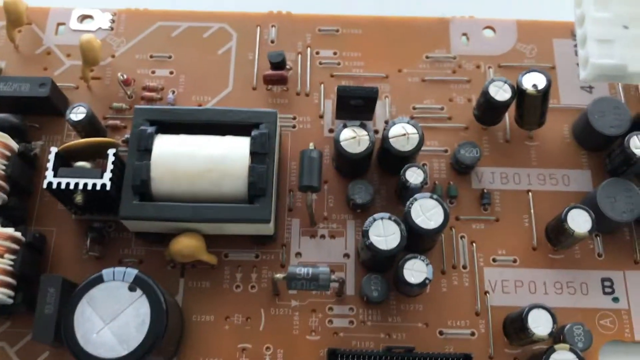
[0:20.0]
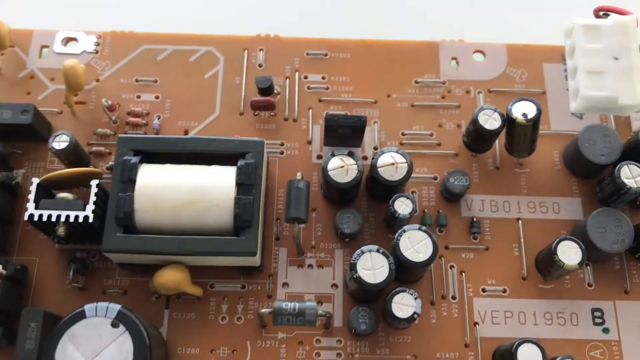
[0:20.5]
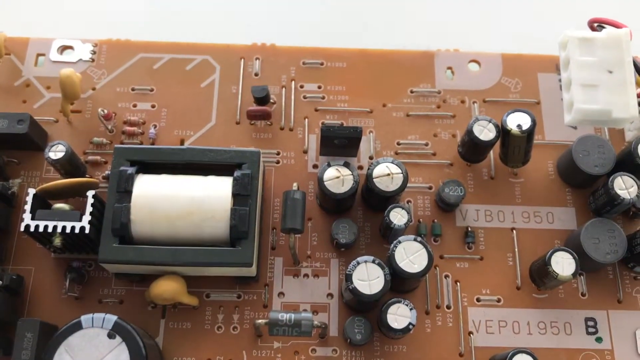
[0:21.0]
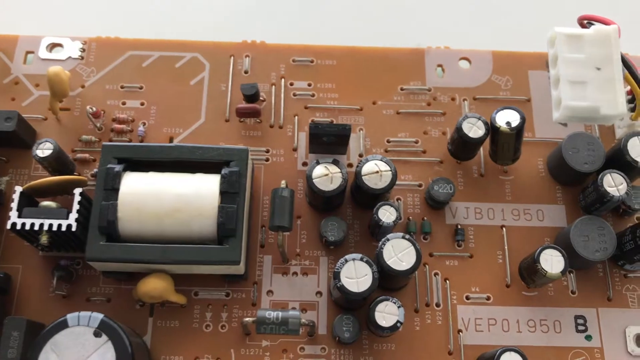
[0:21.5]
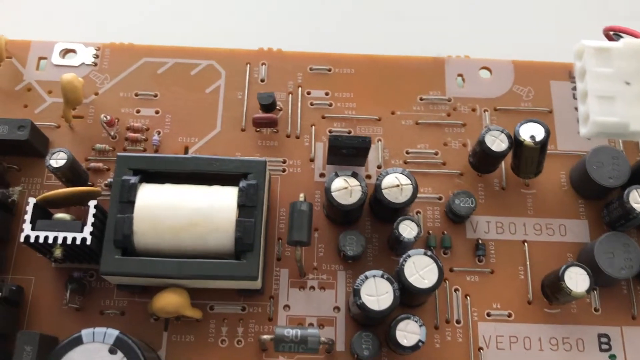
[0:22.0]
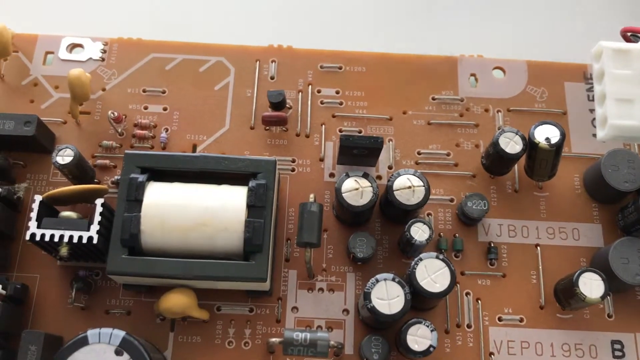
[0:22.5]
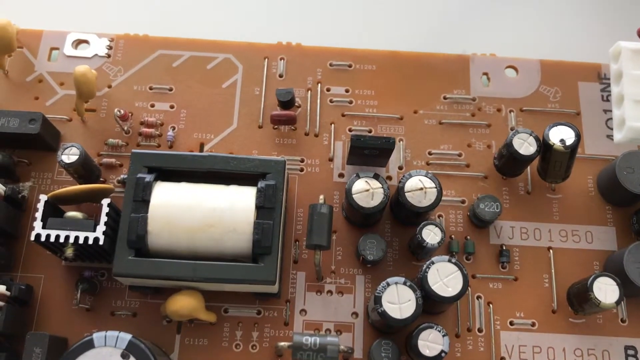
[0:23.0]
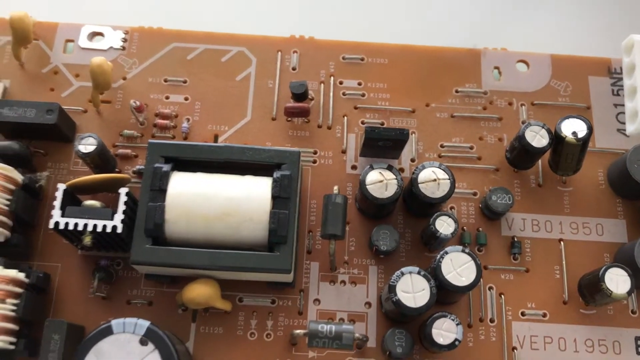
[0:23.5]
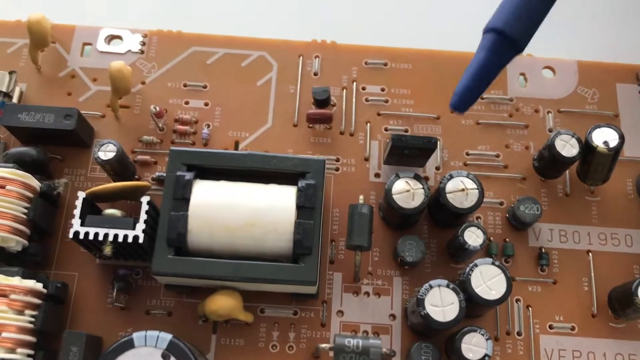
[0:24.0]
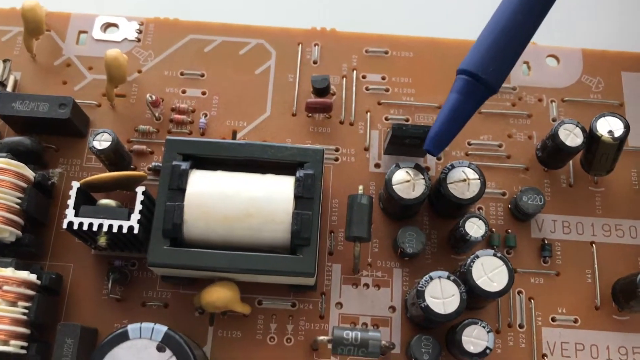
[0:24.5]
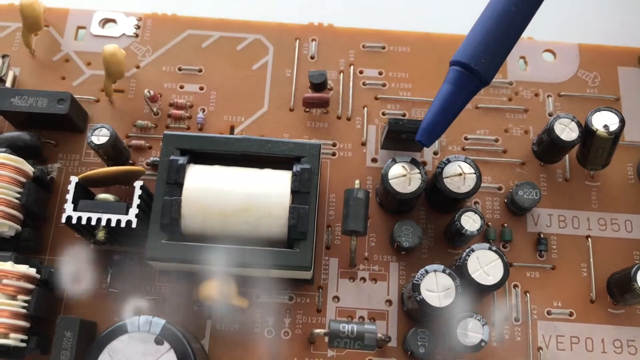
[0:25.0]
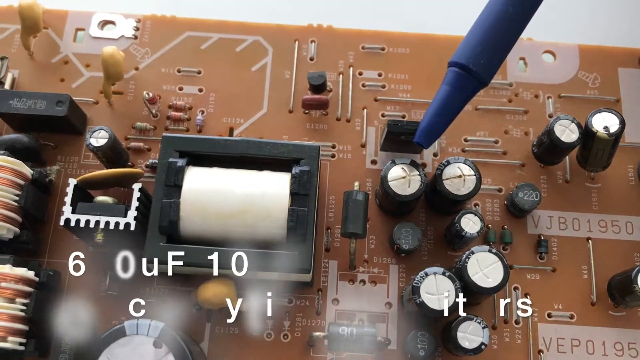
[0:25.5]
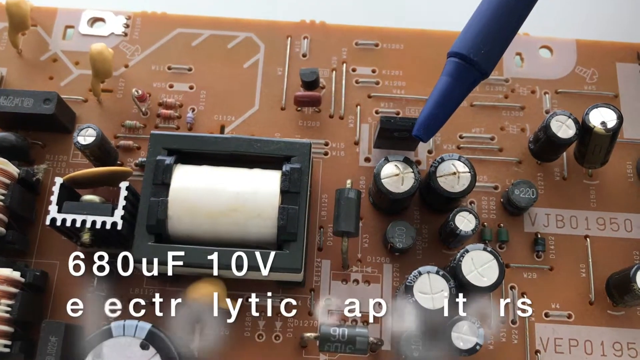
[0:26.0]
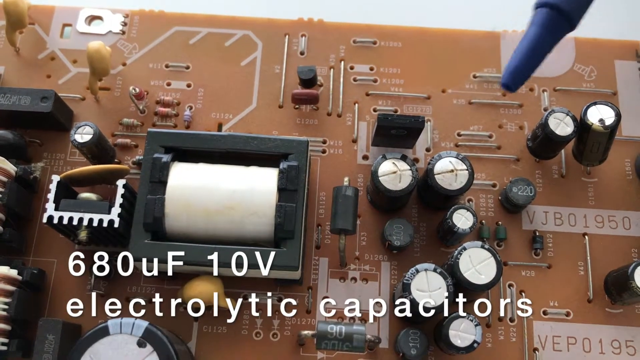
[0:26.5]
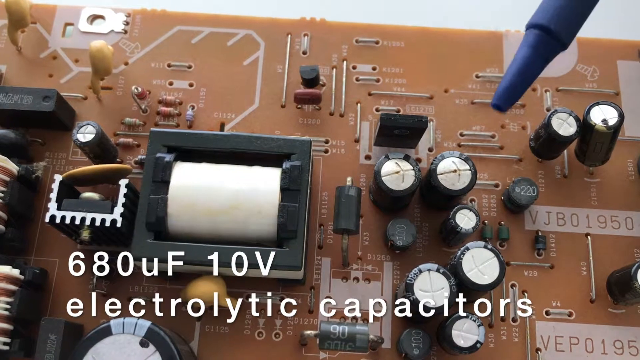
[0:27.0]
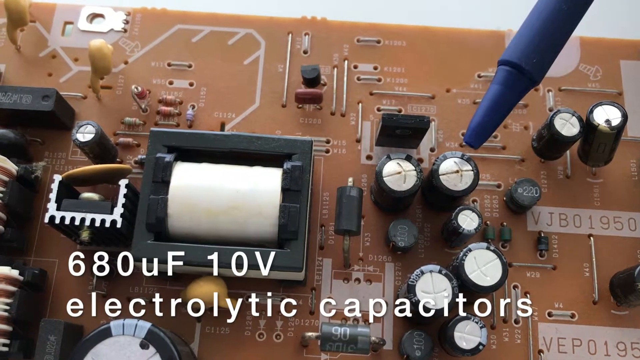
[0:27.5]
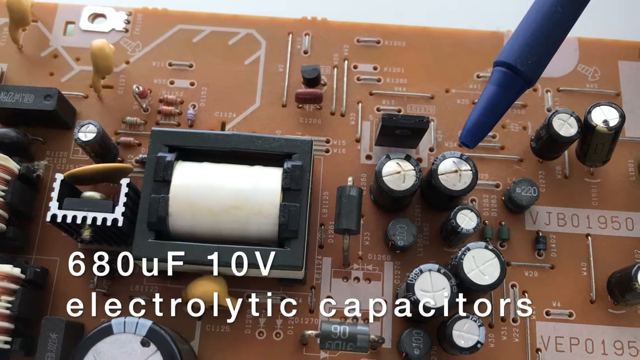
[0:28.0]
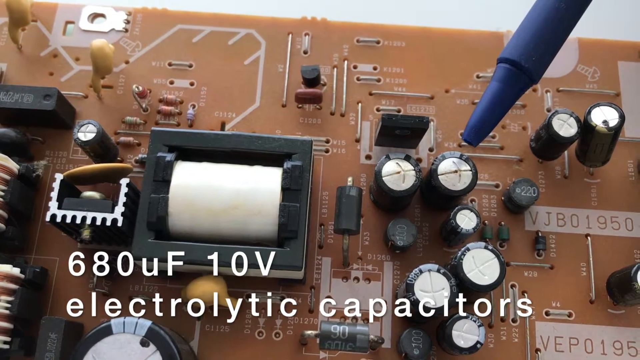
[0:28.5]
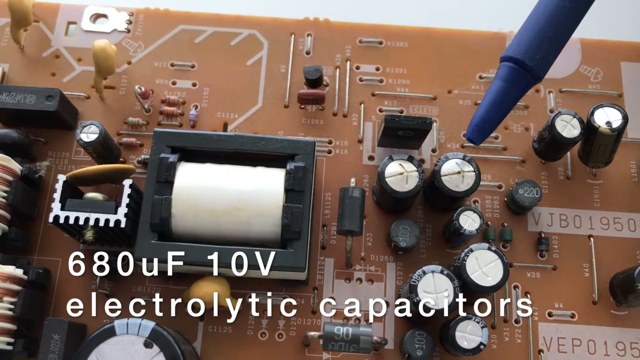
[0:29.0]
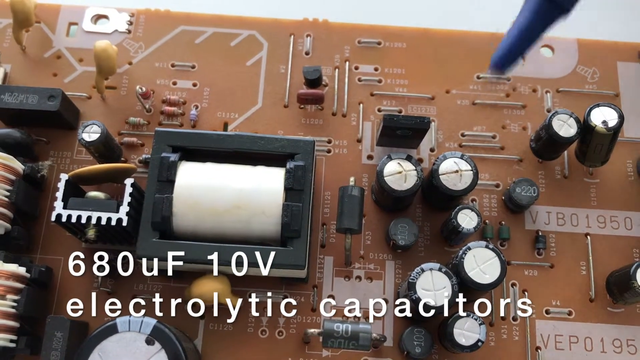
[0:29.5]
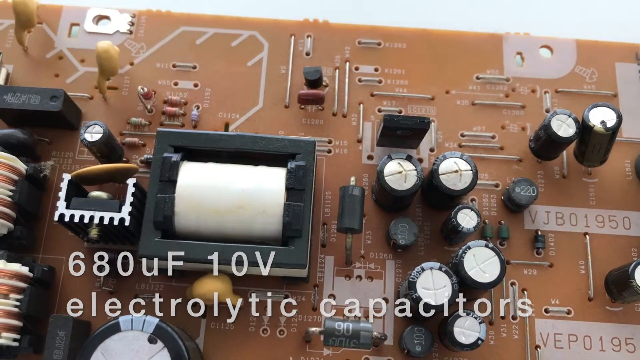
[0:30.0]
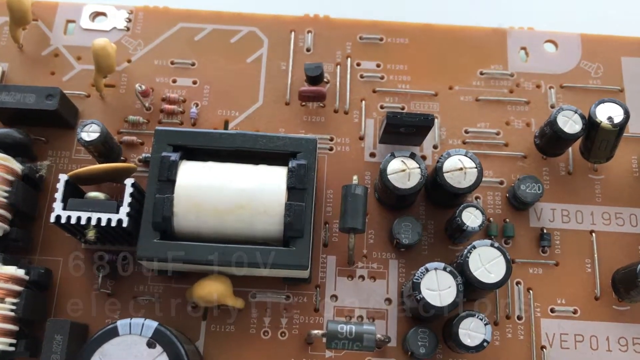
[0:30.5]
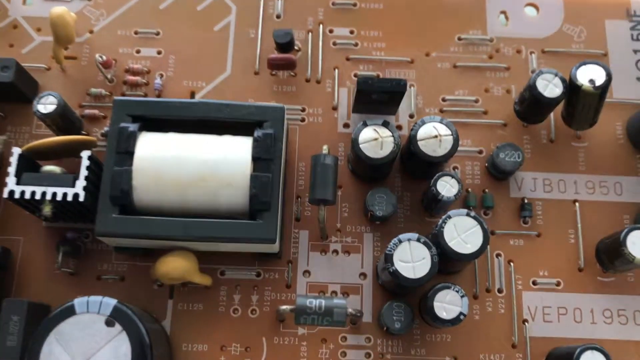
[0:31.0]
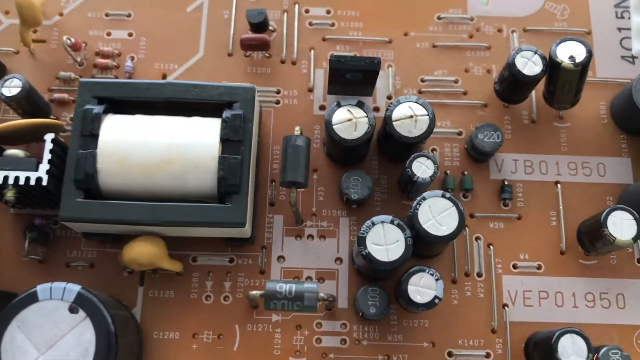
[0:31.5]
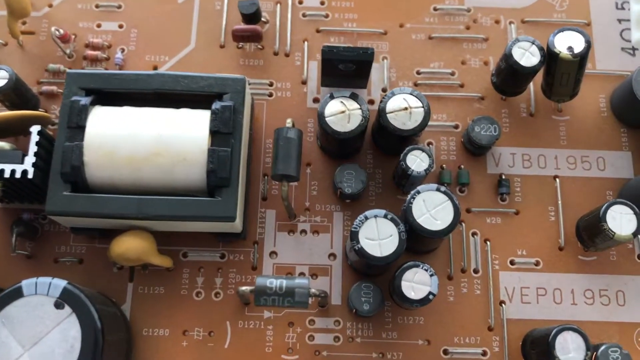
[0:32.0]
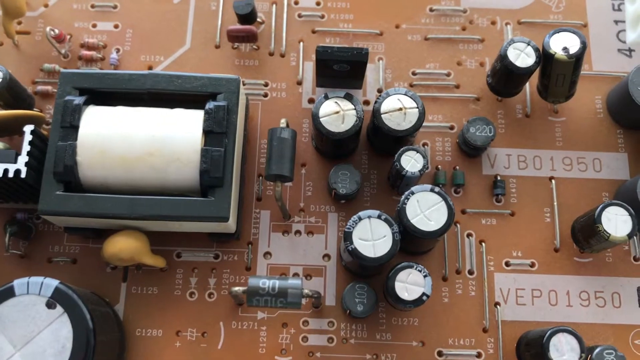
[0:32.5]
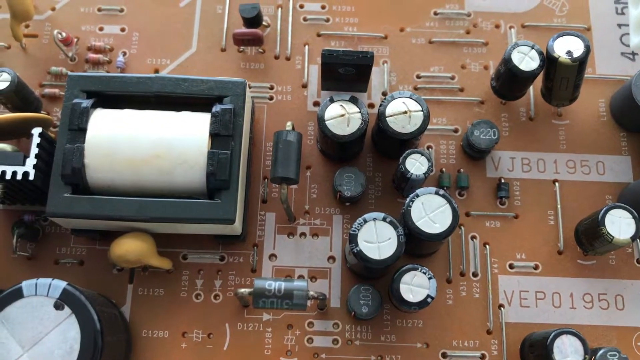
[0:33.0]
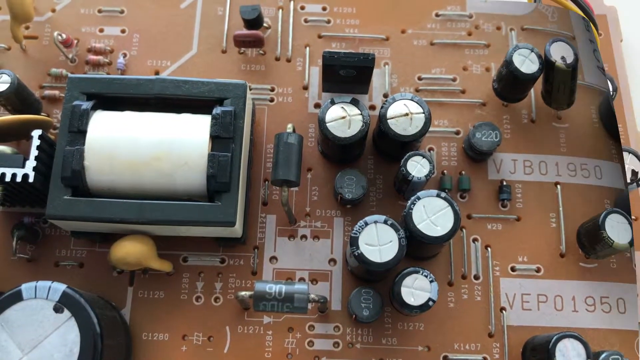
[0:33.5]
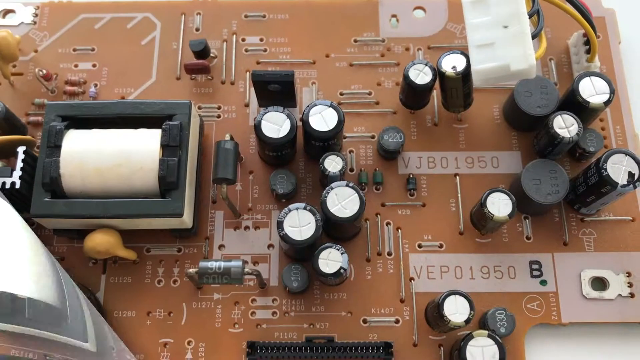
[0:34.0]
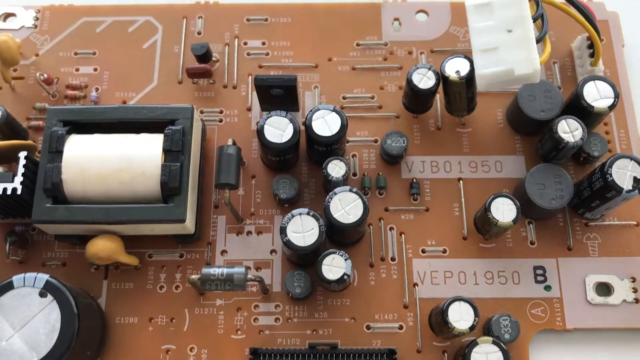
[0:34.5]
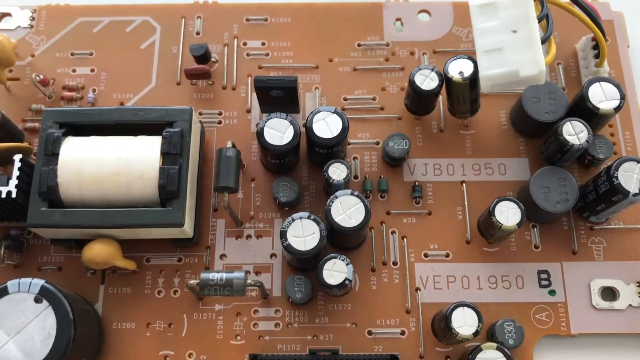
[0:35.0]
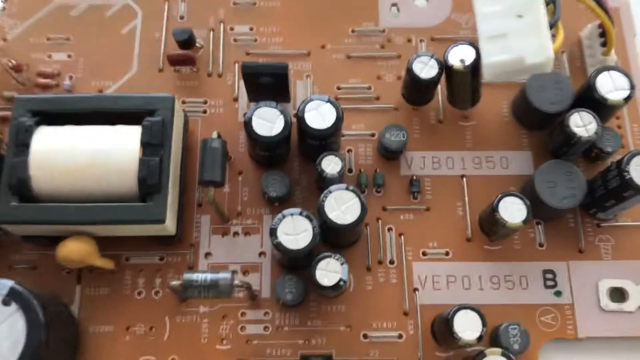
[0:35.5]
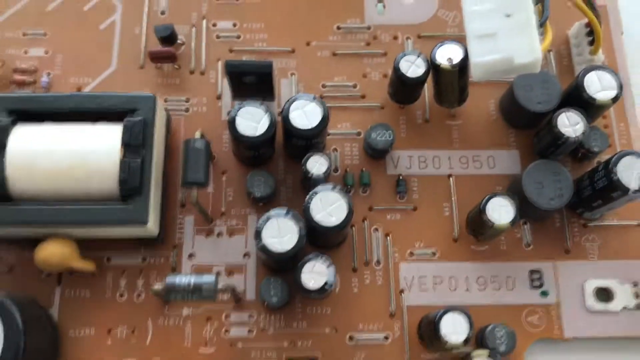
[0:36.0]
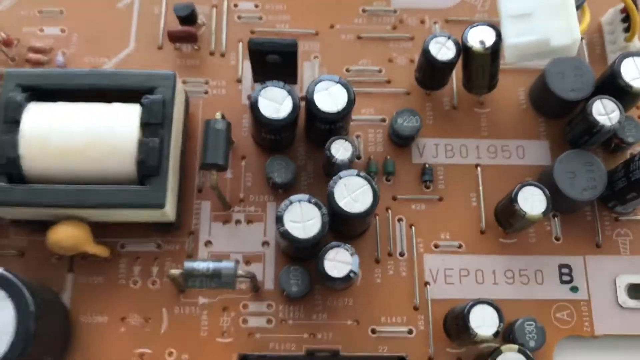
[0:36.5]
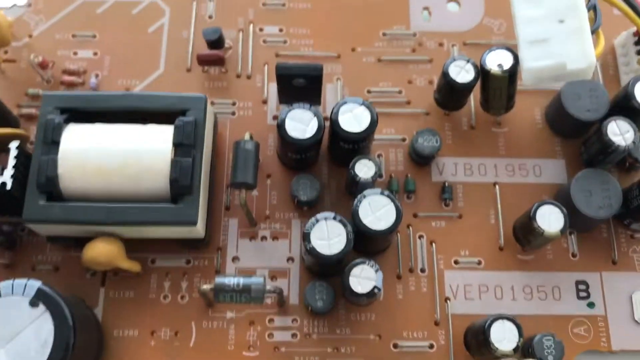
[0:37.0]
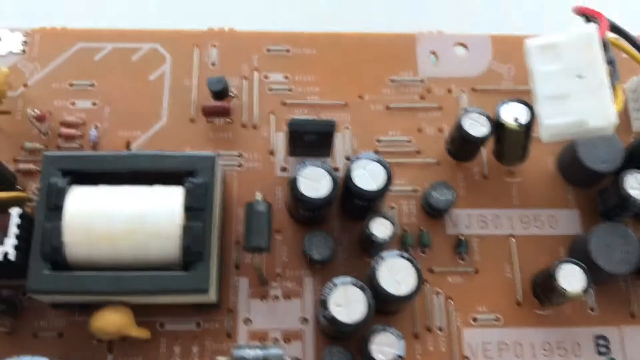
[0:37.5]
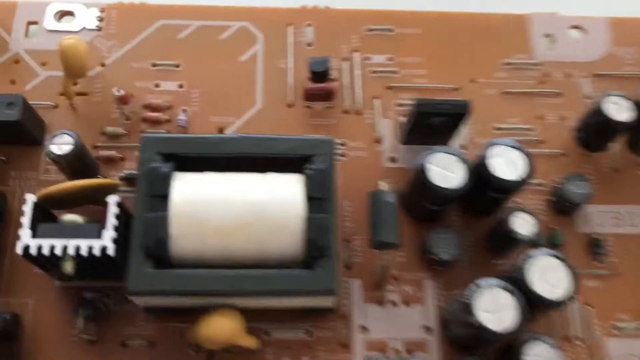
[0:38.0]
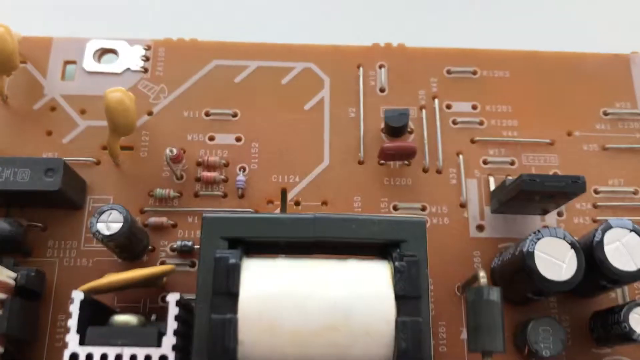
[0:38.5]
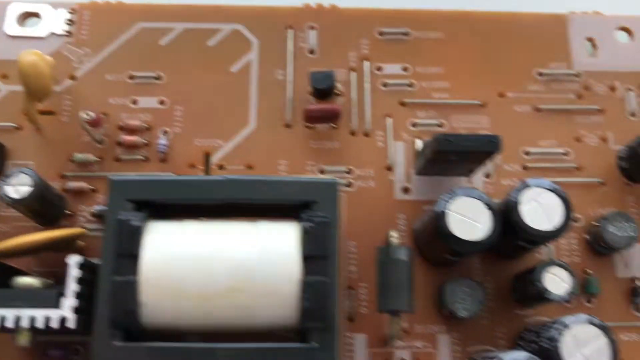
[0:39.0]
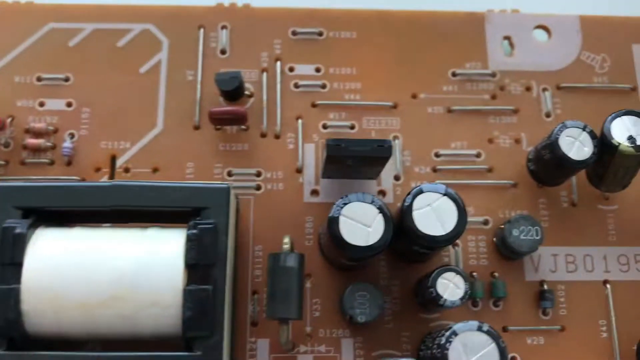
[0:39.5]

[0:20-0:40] The same circuit is shown inside its plastic frame, which is brown or a combination of brown and orange. The person recording zooms in on the elements in the upper part of the circuit. What seems to be the tip of a blue crayon, blue marker or maybe blue pen points at a specific round element that is white or metallic white with what seems to be a black plastic covering. Text at the bottom of the video reads "680UF 10 volts electrolytic capacitors", identifying the elements being pointed at. After a transition, the same circuit is shown again, and the camera slowly moves from one side of the circuit to the other, showing different areas and details.